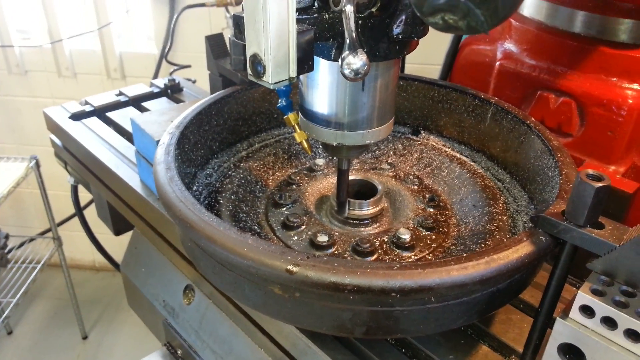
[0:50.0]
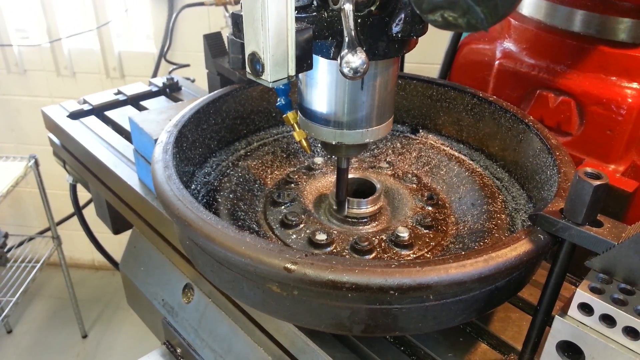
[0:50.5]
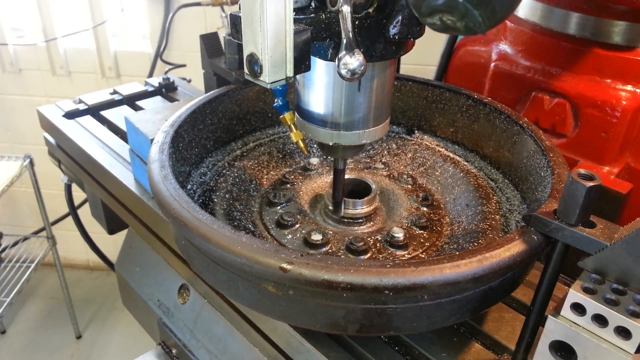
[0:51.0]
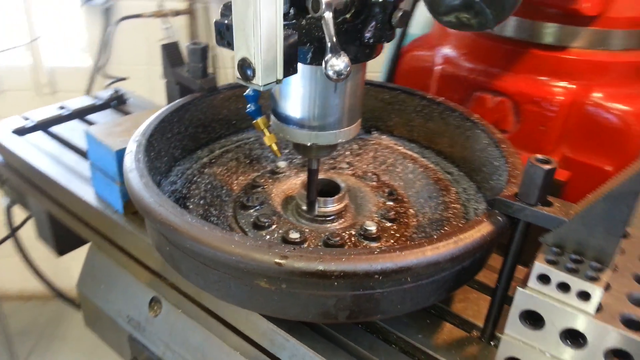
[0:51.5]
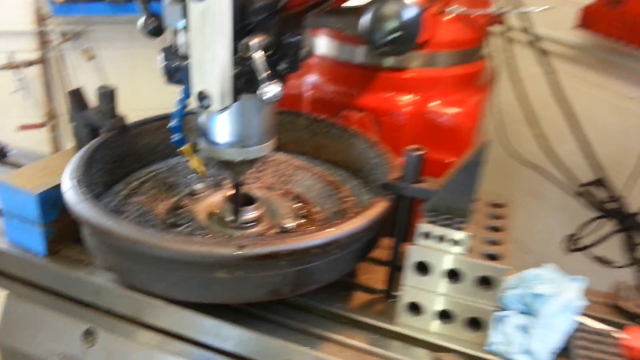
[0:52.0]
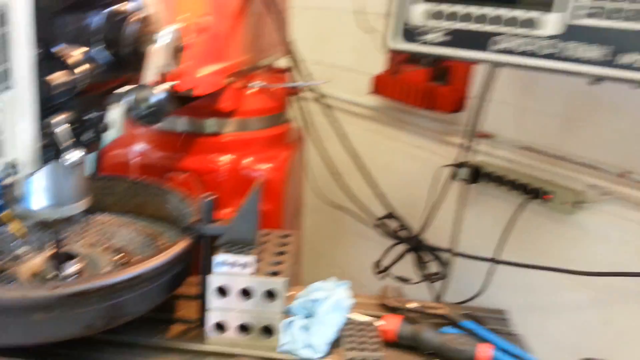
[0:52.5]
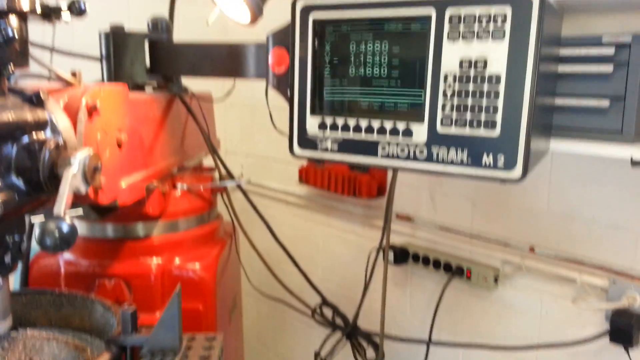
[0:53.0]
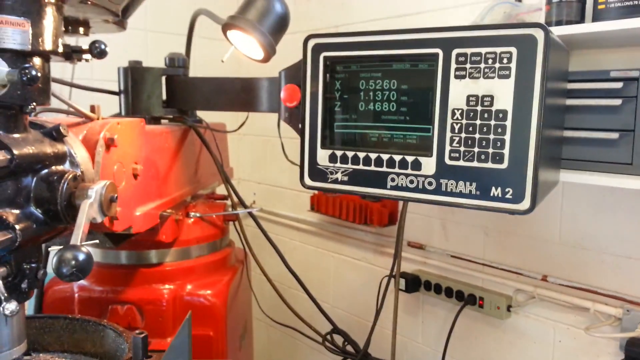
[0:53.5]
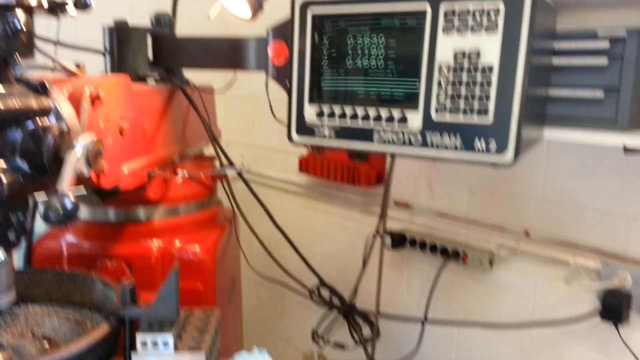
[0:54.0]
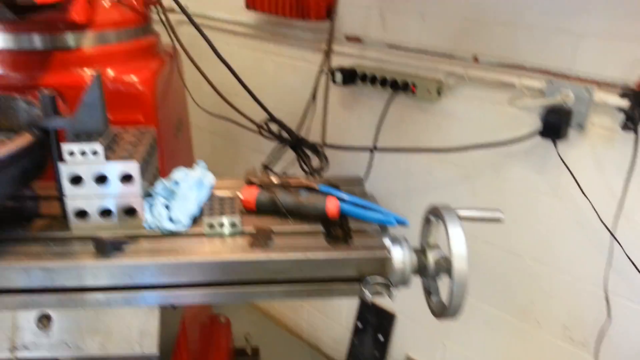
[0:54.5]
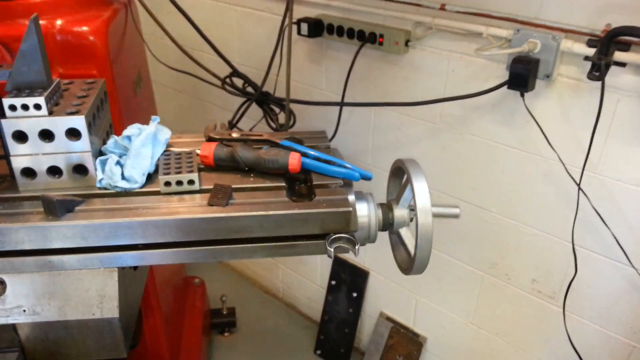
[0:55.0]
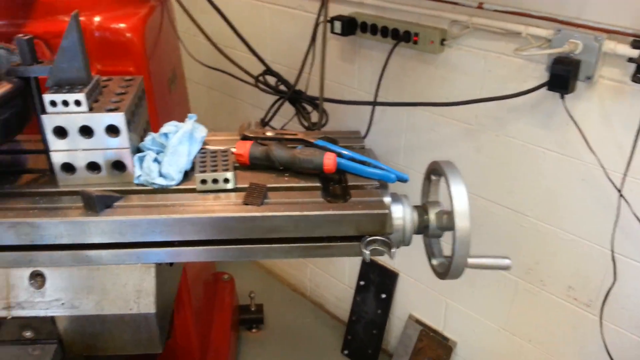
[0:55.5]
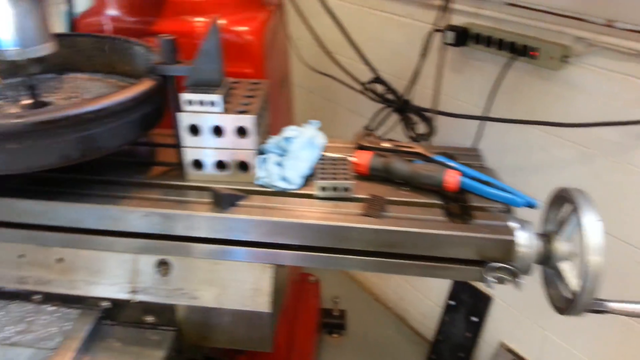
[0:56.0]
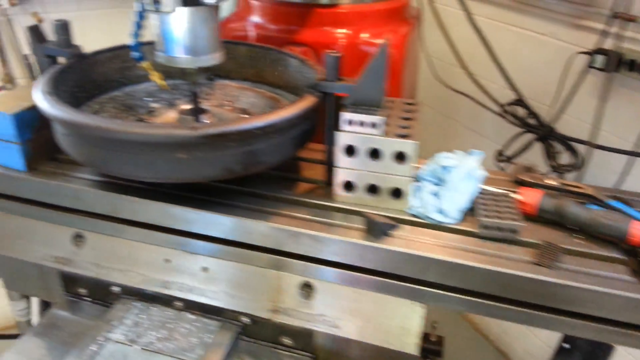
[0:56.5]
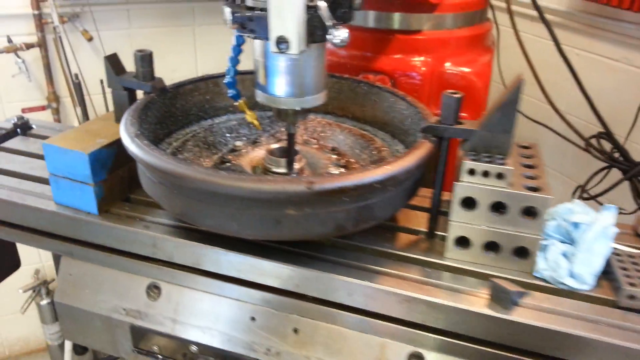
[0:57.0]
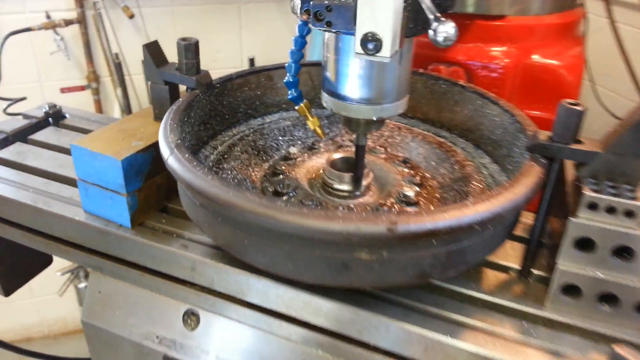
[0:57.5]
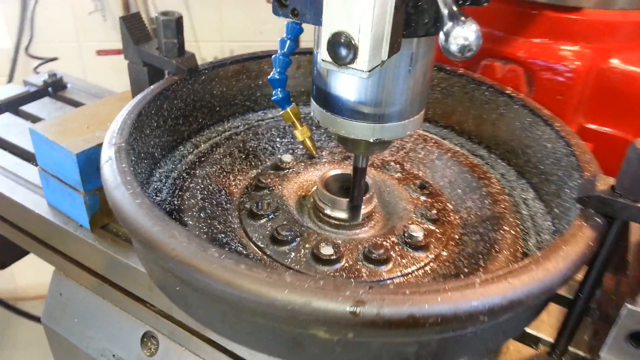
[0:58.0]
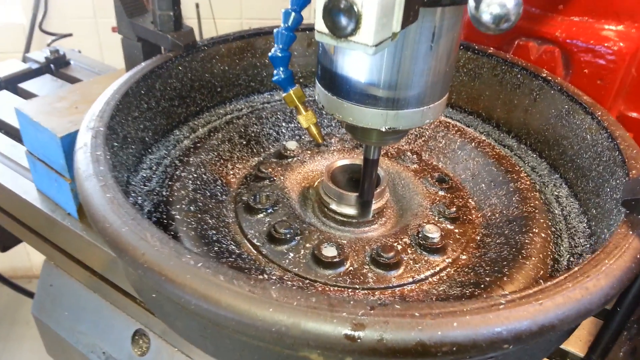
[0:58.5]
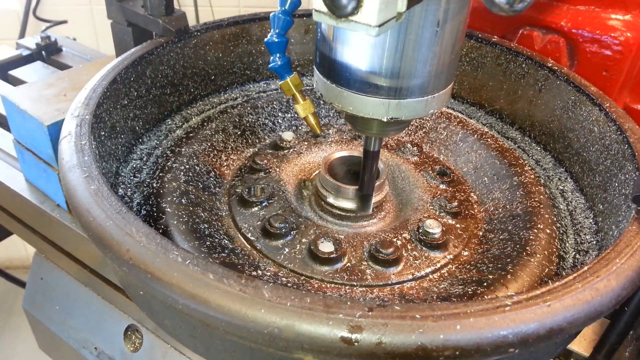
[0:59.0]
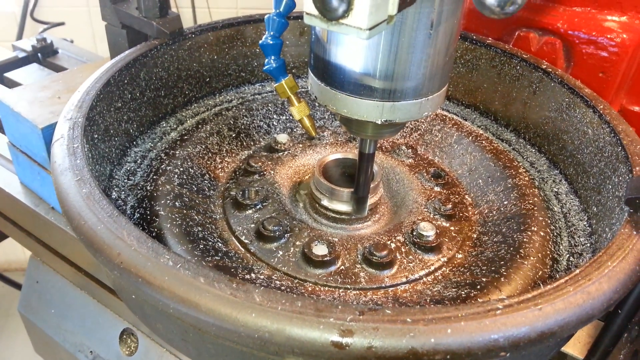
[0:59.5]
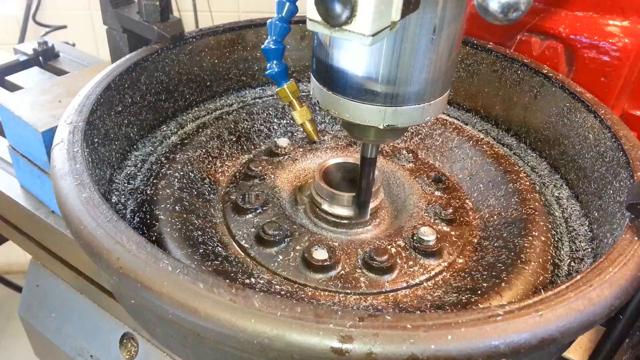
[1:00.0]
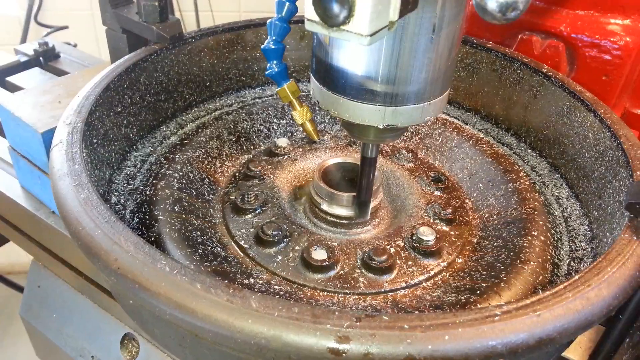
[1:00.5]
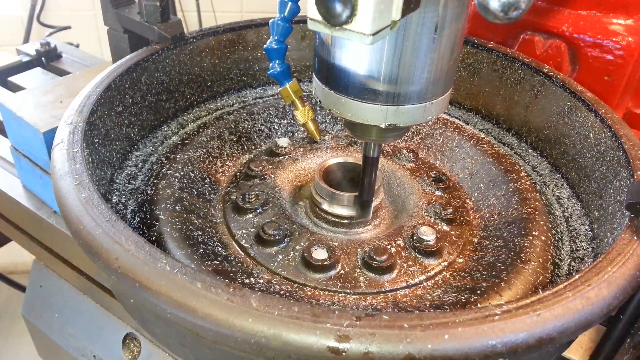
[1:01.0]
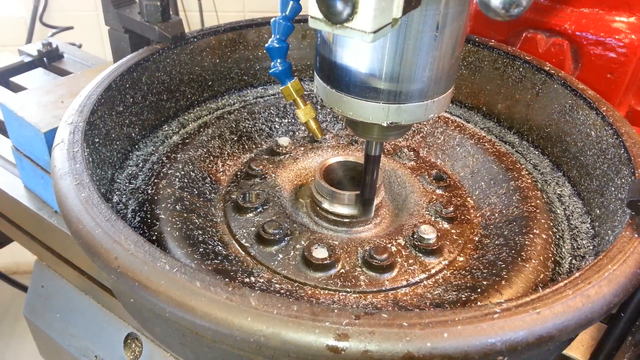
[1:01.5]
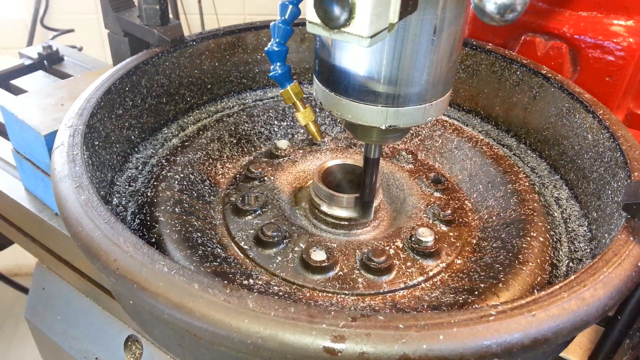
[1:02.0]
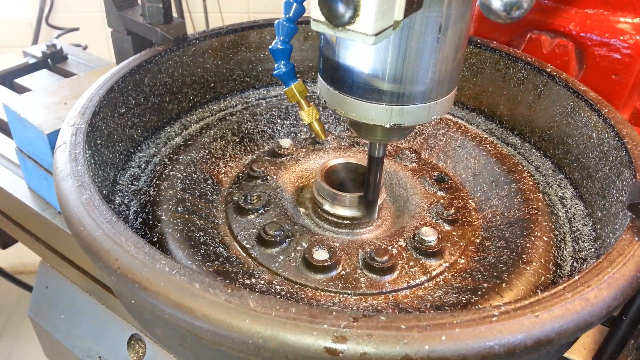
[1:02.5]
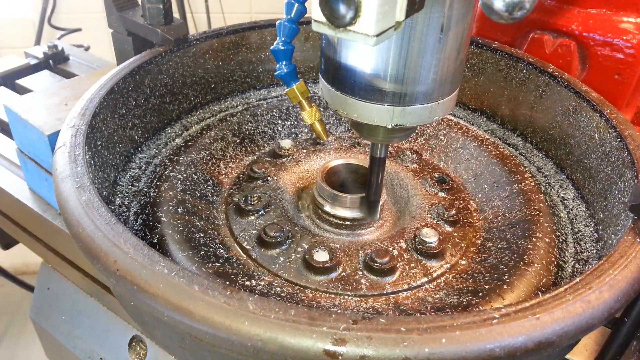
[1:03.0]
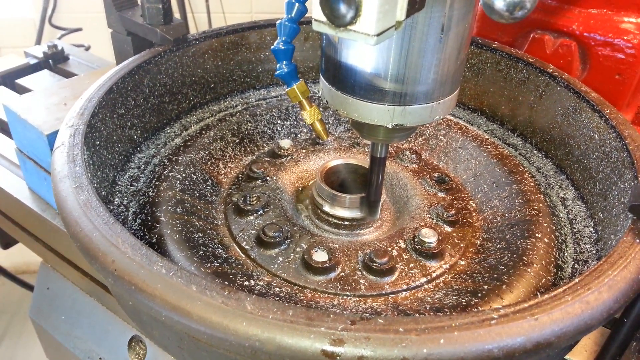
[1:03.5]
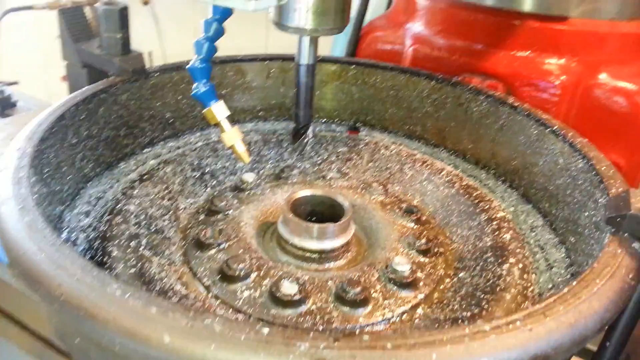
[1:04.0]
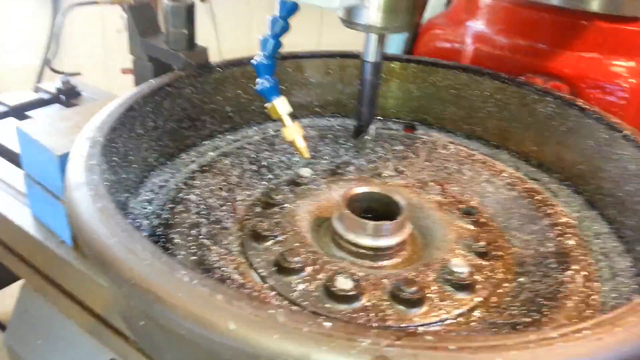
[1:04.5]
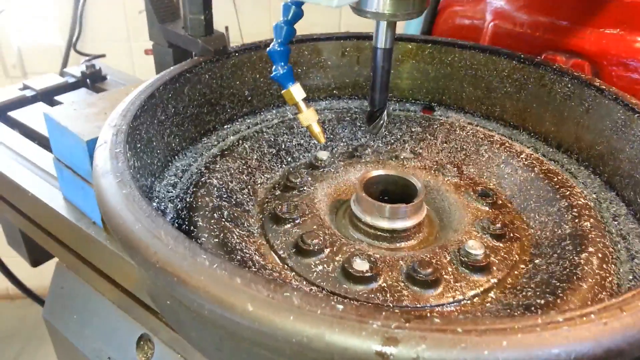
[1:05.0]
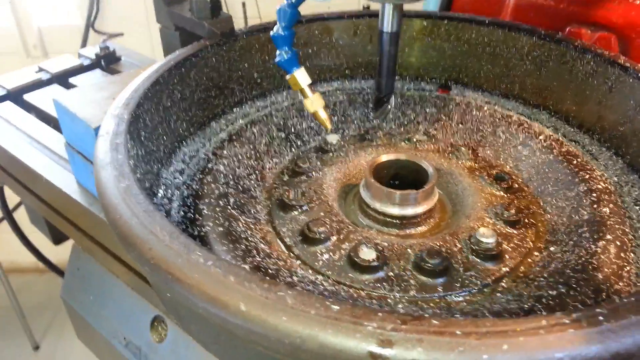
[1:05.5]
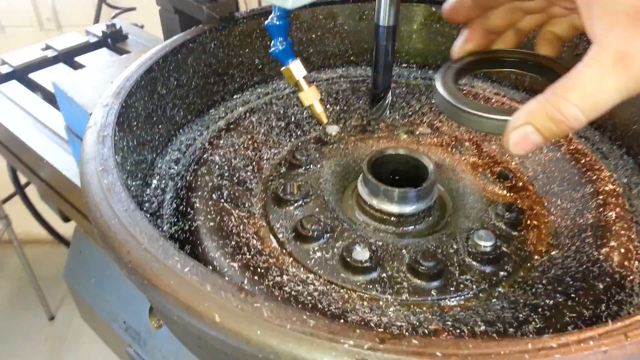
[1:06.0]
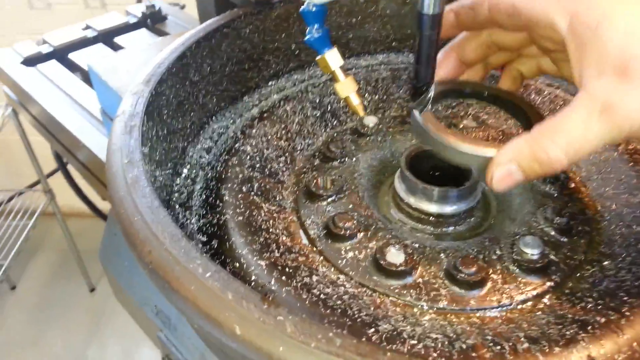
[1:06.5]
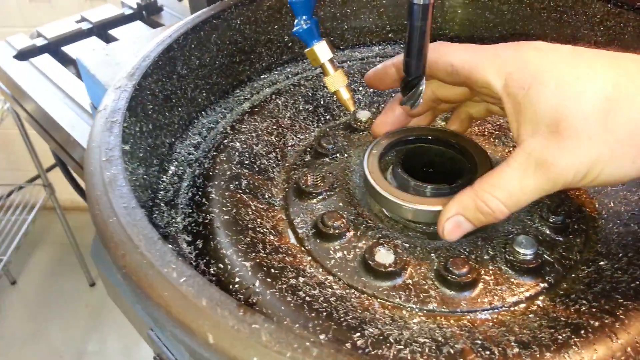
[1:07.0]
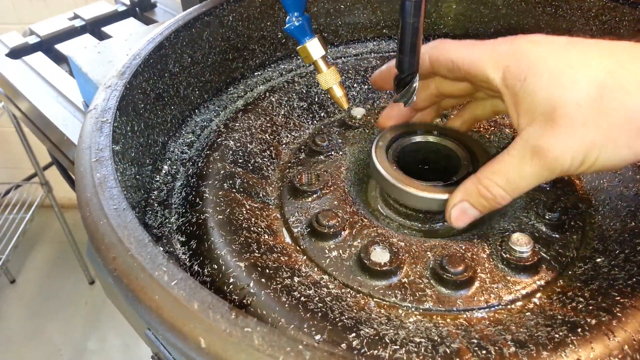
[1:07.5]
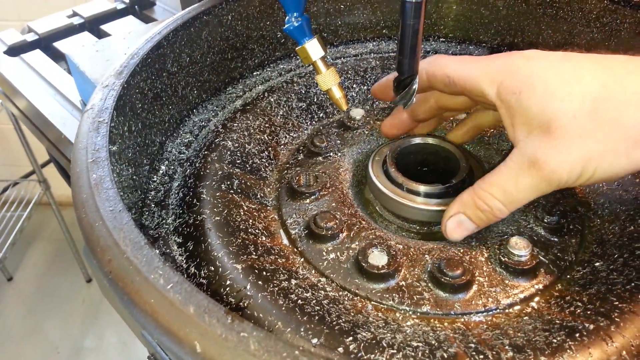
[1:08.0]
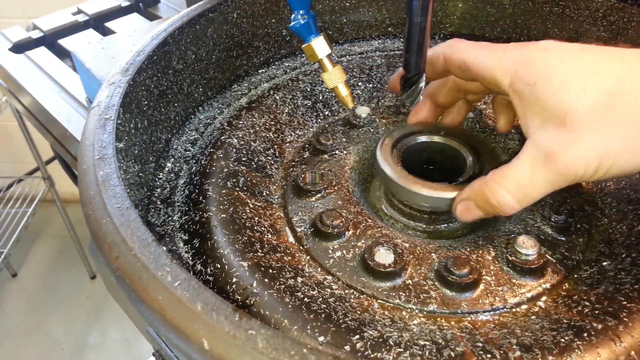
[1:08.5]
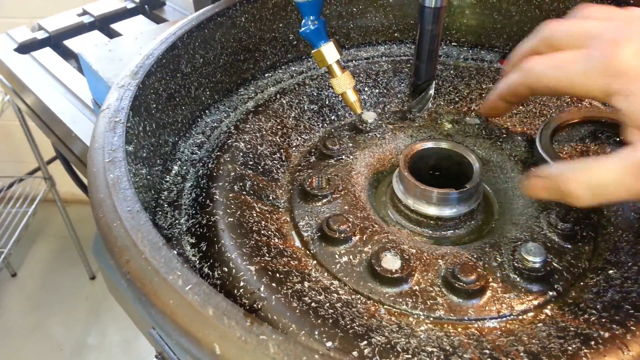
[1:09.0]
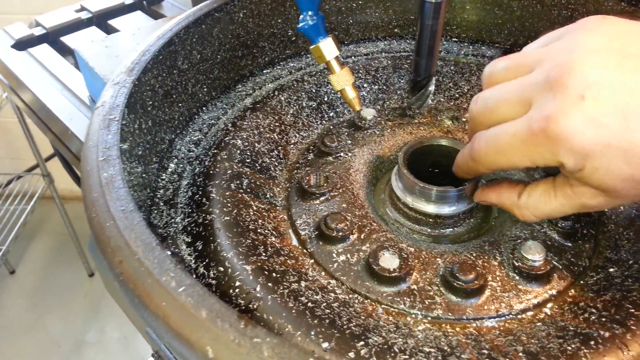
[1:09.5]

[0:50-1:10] The drill faces down at the hub; it looks like it might be spinning, but the shot is very tight, so it is hard to tell. The camera pans to the right, where a digital panel on the wall has gray buttons and a screen with green letters all over it. It pans down to a wheel turning very slowly clockwise. The camera returns to the drill, which is spinning in a circle around the center of the hub inside while fluid sprays onto it from a copper-colored nozzle. Then the drill stops and is shown above where it had been drilling. A hand comes in with the bearing and puts it over the center part of the hub where it was drilled, then pulls the bearing away, sets it down, and puts a finger inside as if to rub away anything built up there.